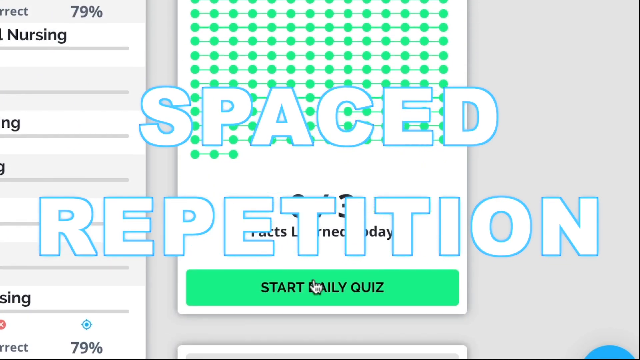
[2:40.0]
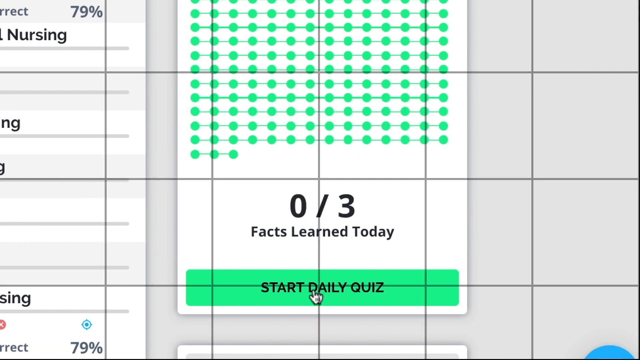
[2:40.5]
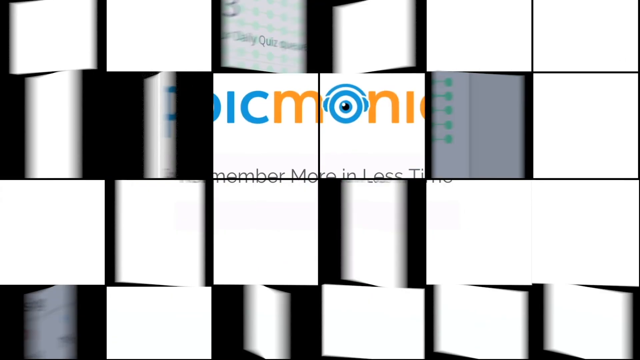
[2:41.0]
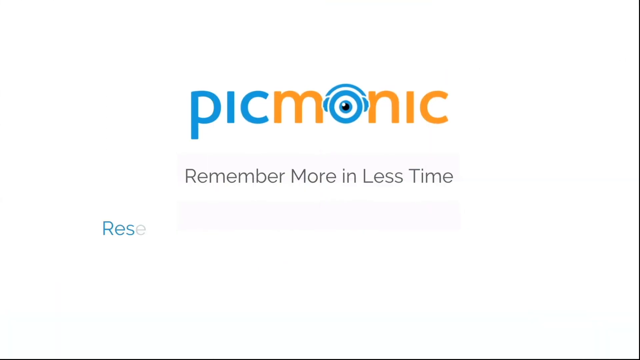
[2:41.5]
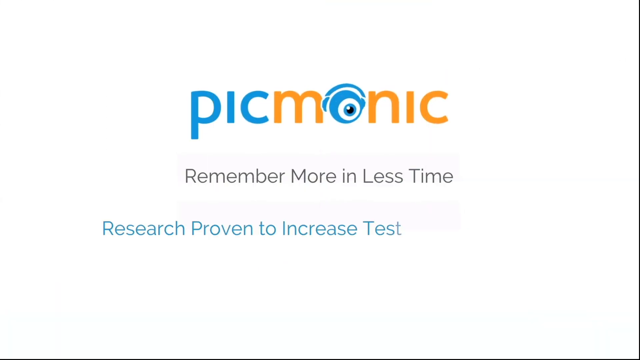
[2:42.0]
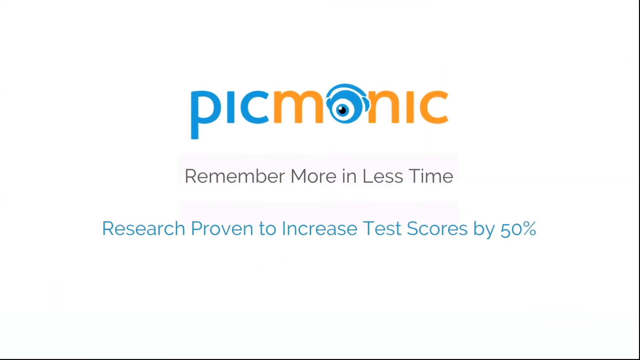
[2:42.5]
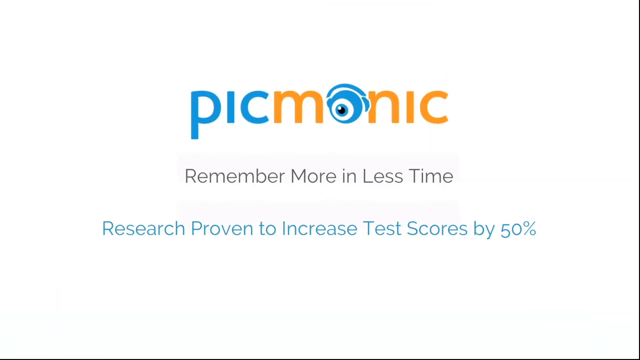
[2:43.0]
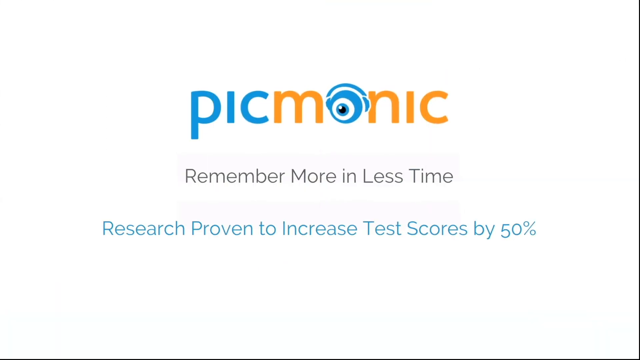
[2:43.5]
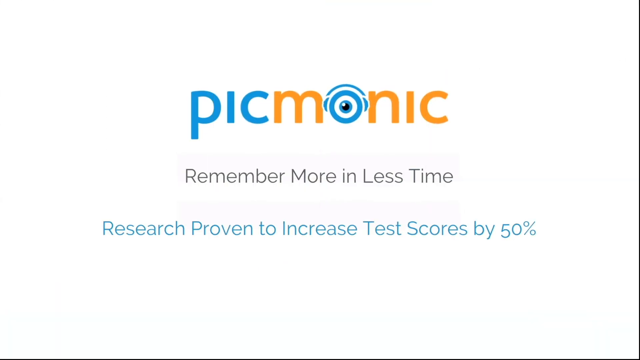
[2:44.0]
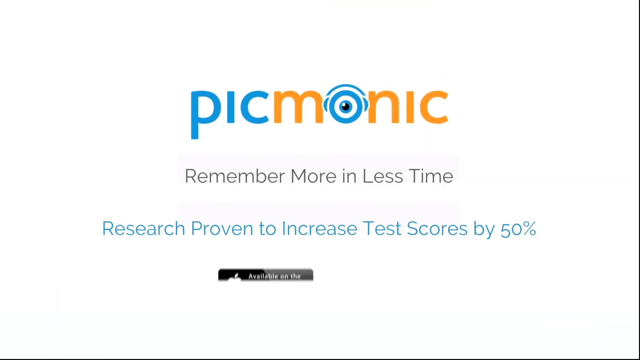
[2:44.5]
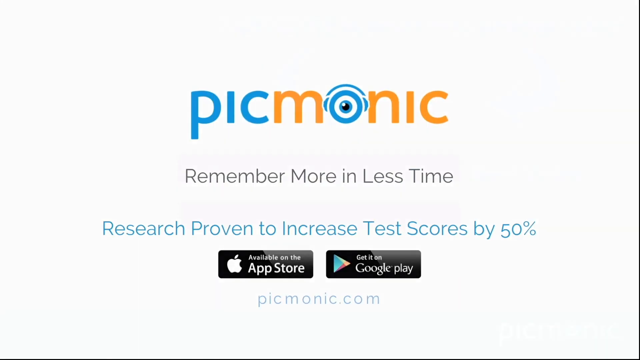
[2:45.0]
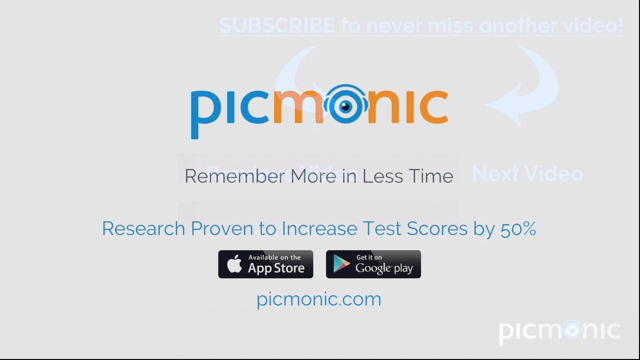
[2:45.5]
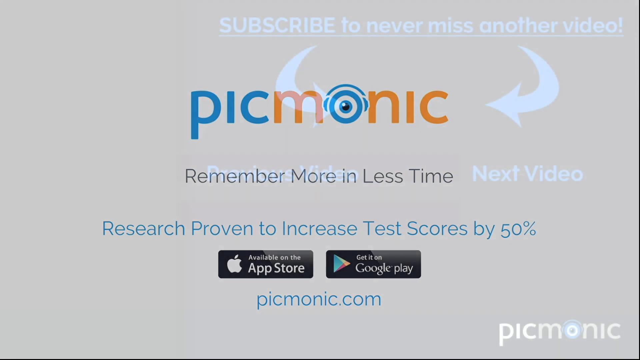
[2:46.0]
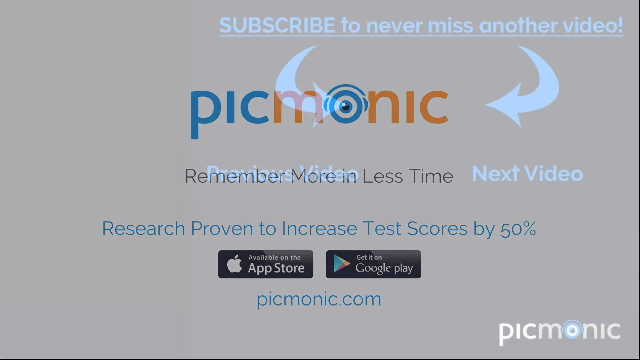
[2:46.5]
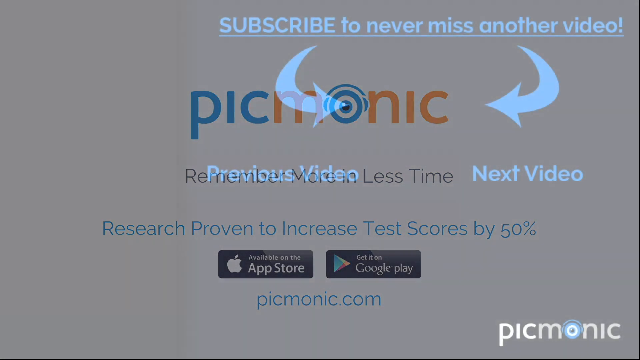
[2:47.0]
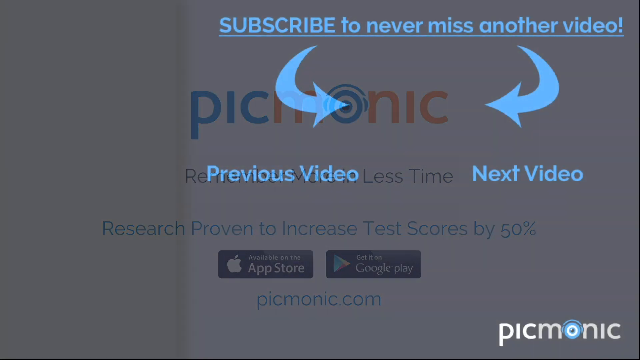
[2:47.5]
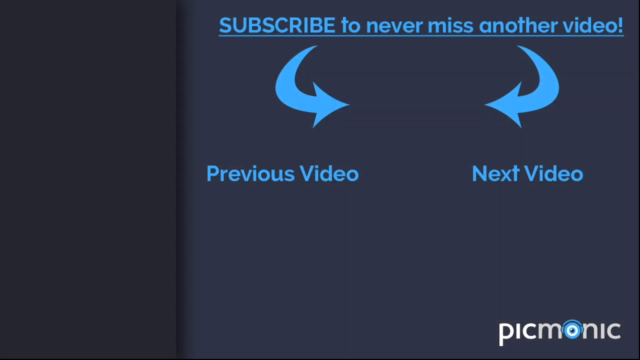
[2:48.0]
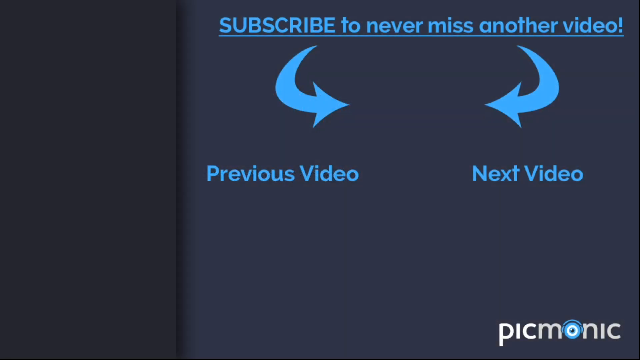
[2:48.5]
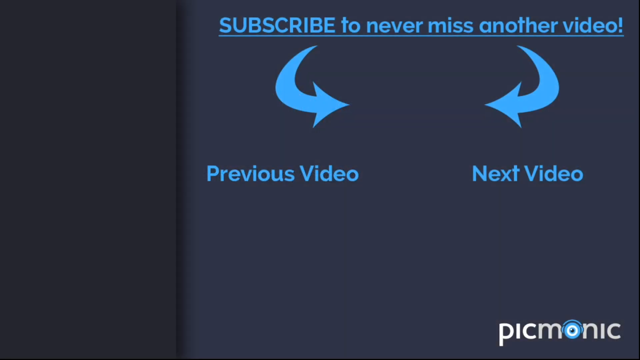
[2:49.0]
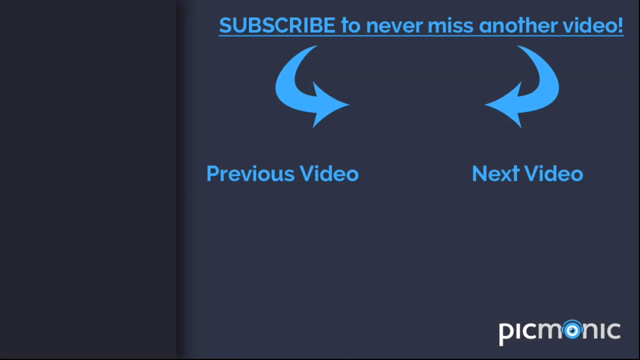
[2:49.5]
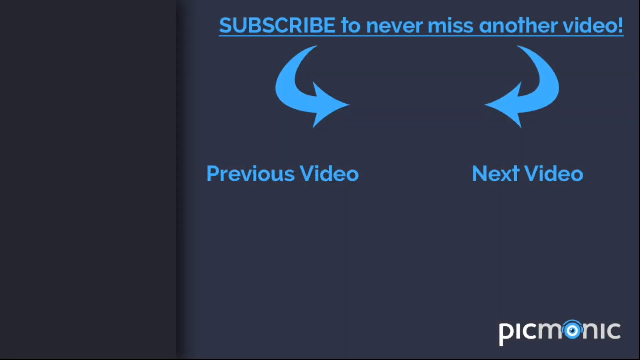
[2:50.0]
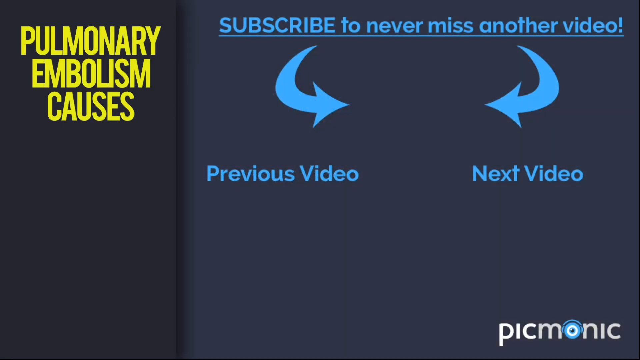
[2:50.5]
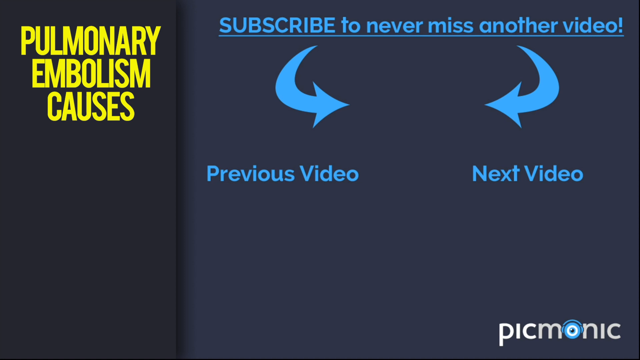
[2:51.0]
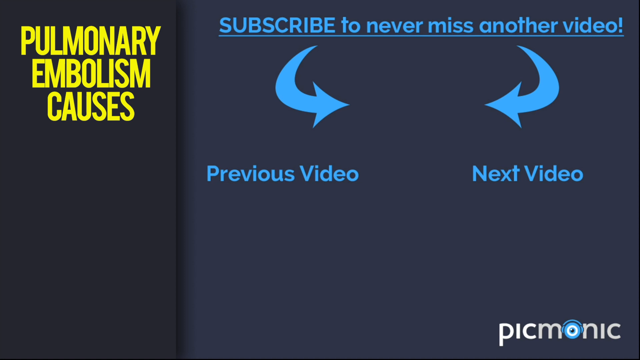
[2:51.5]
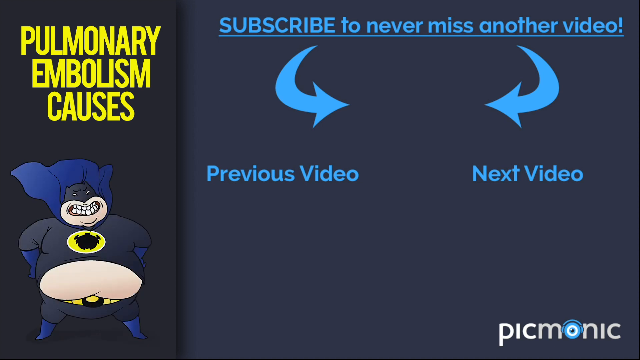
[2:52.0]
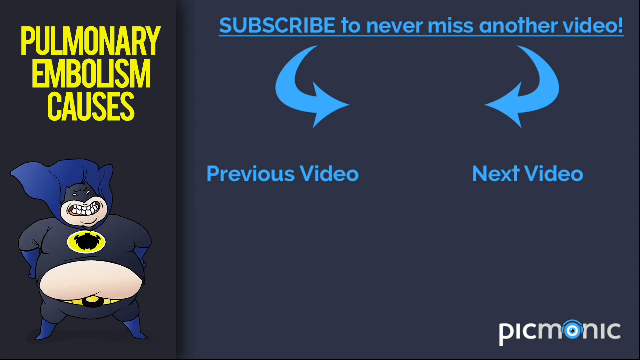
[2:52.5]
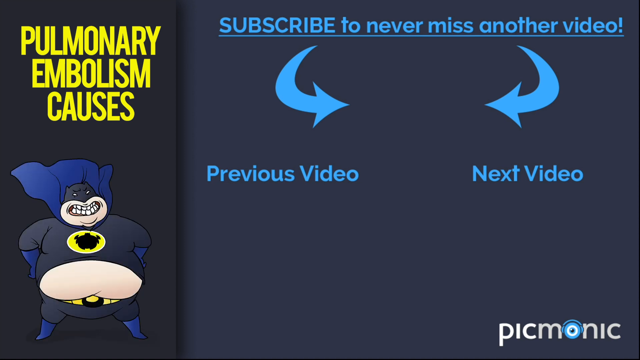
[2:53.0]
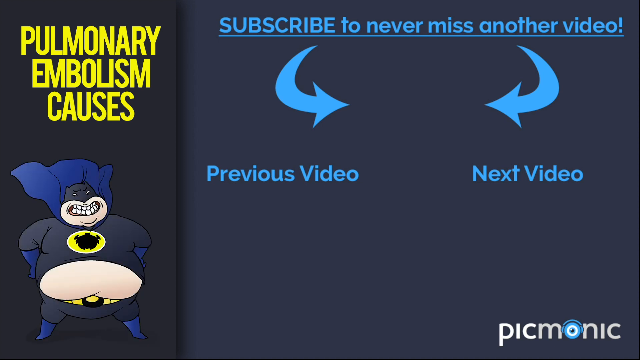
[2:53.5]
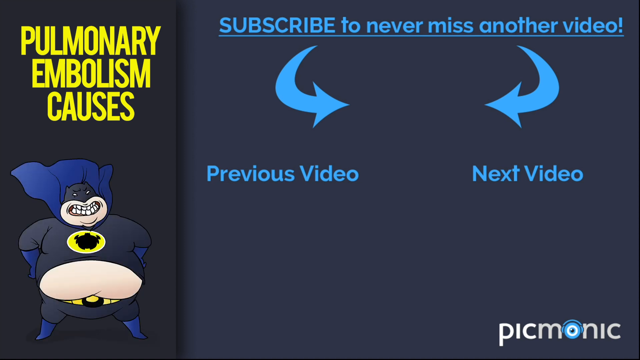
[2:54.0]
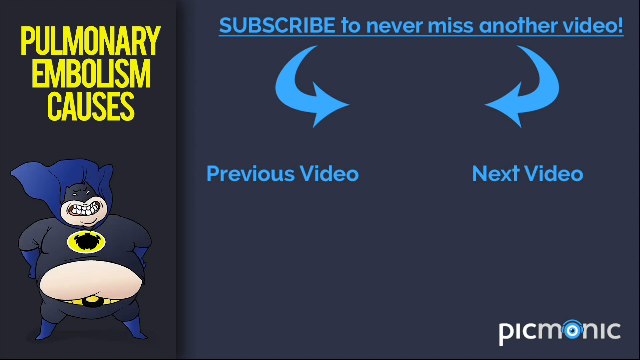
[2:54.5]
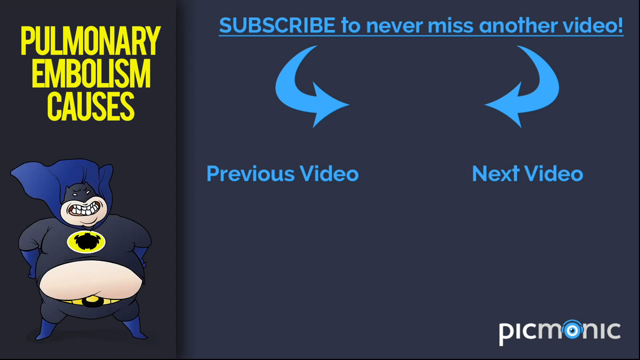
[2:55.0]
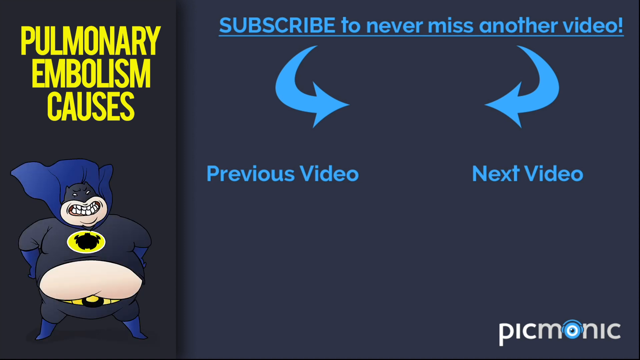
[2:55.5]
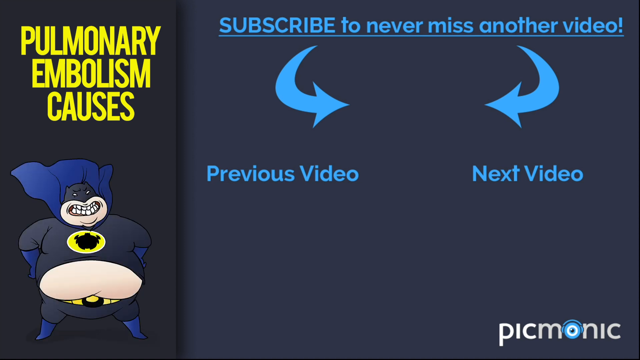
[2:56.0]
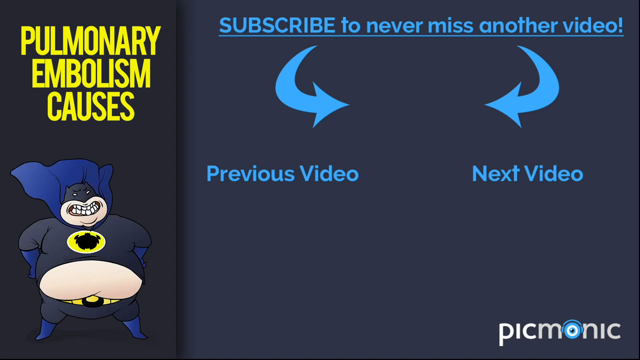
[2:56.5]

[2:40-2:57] A screen share shows the Picmonic page. In a box, various equally spaced green dots have lines going through them, with overlaid text reading "space repetition." Below it is "start daily quiz," which the user clicks. The page breaks up and the Picmonic logo appears in blue and orange, its O a blue eyeball wearing headphones. Under it is black text, "Remember more in less time," and under that, in blue, "research proven to increase test scores by 50%," all on a white background. Two buttons pop up, one for downloading on the App Store and one for Google Play, with "Picmonic.com" below them. The next page is mostly dark blue and says "subscribe to never miss another video," with two arrows, "previous video" and "next video."